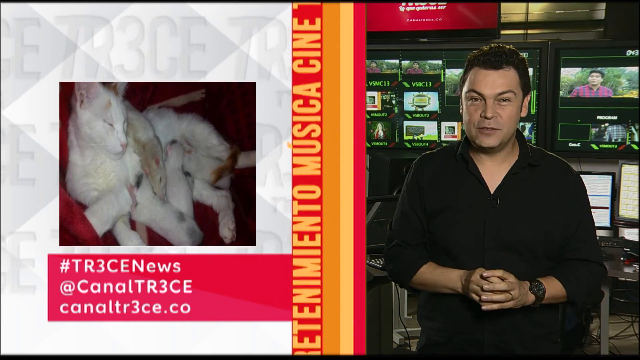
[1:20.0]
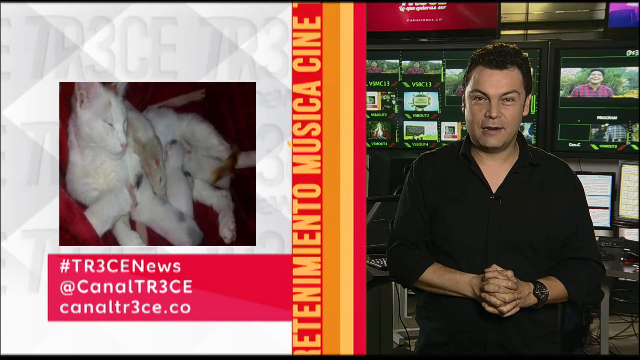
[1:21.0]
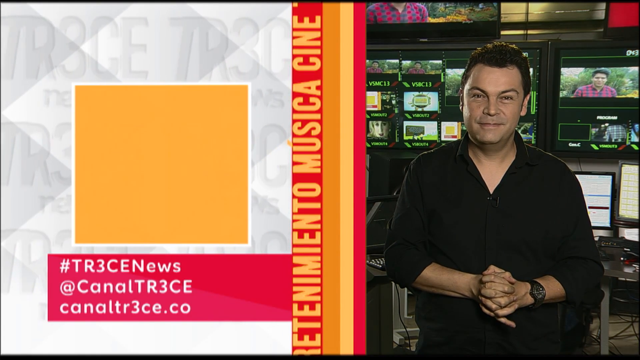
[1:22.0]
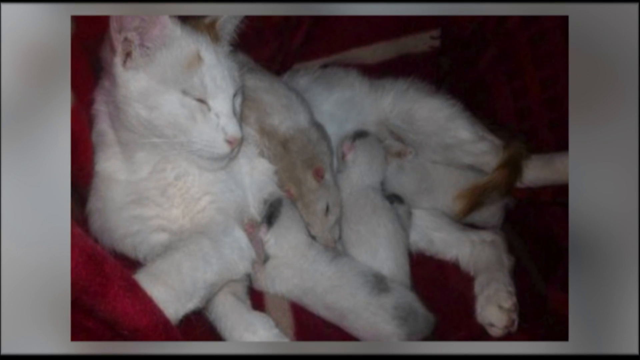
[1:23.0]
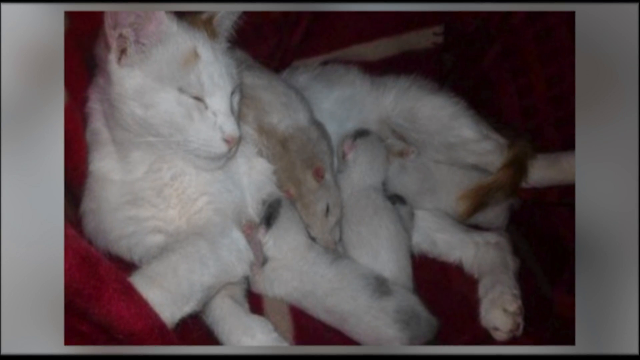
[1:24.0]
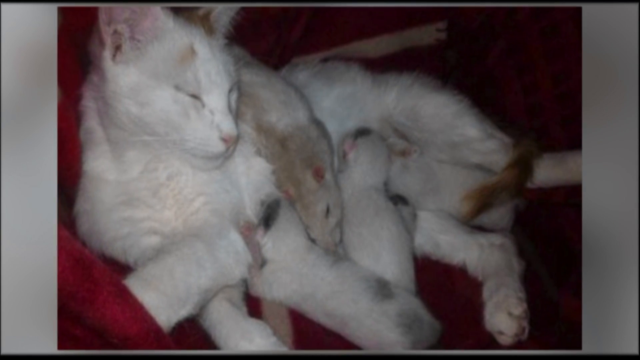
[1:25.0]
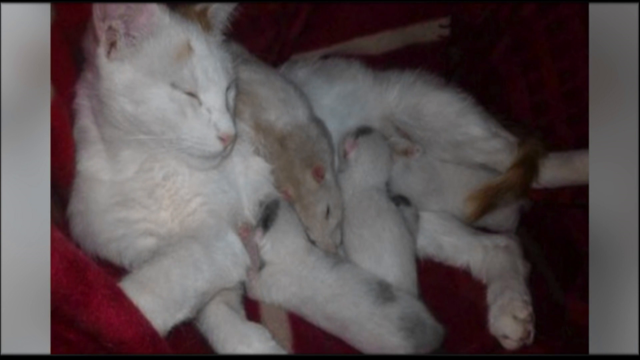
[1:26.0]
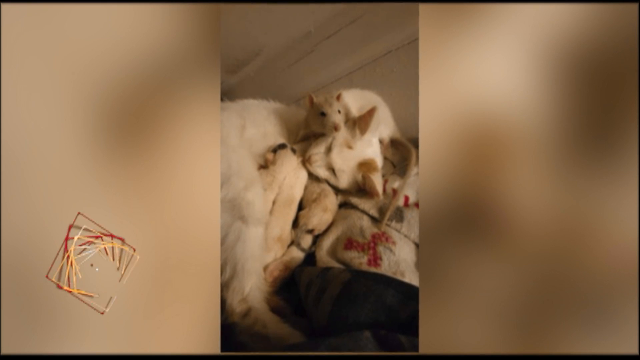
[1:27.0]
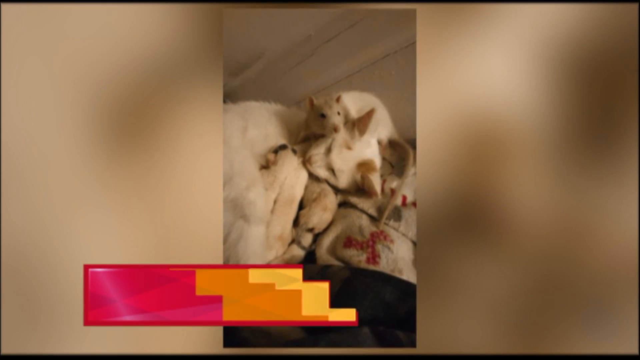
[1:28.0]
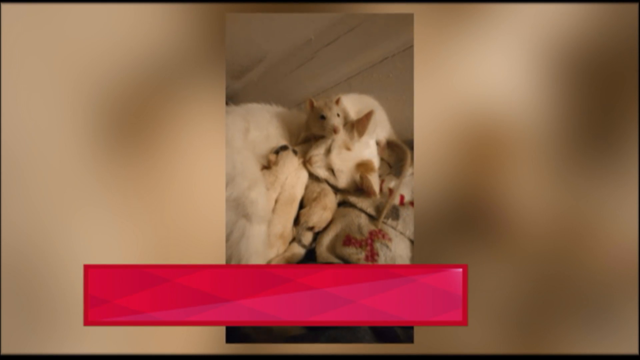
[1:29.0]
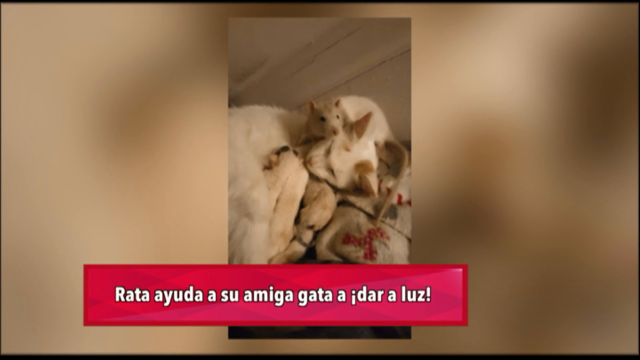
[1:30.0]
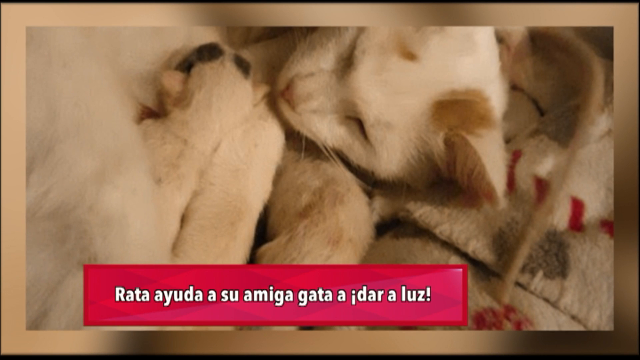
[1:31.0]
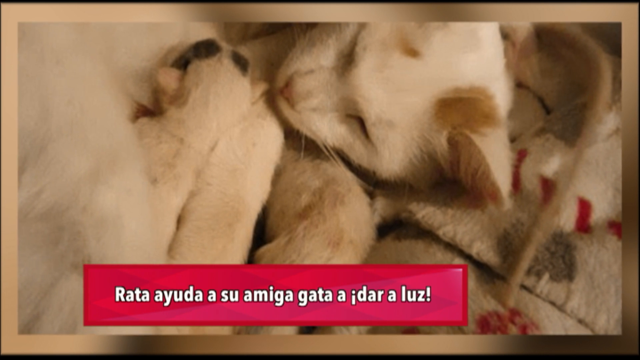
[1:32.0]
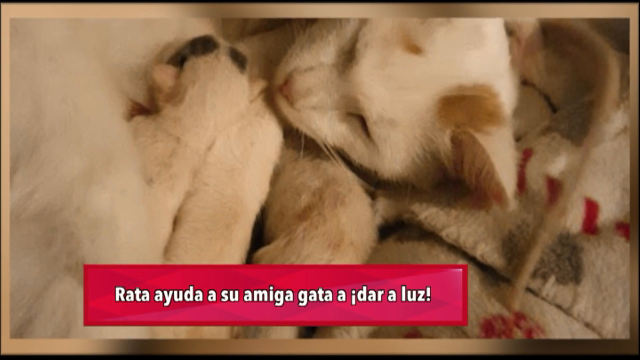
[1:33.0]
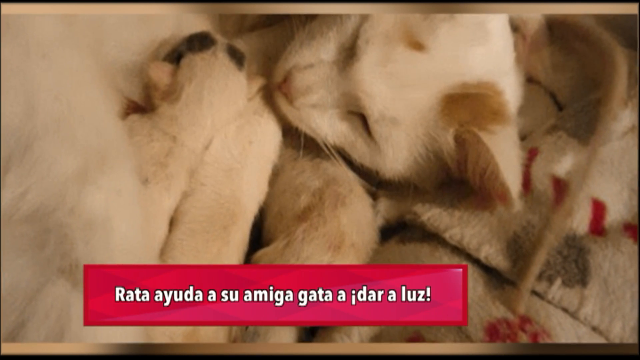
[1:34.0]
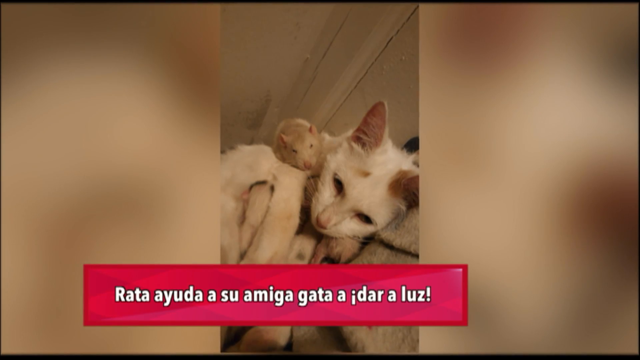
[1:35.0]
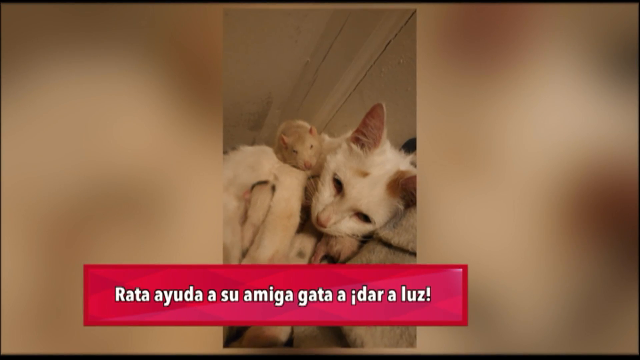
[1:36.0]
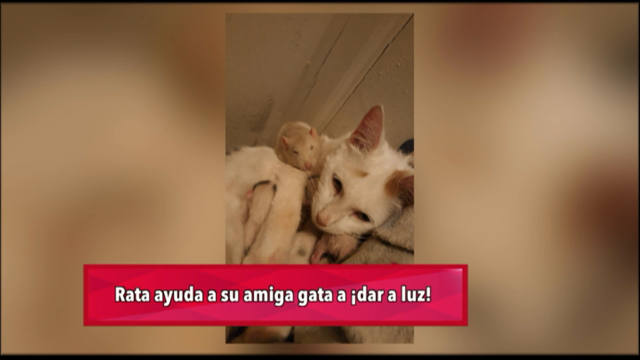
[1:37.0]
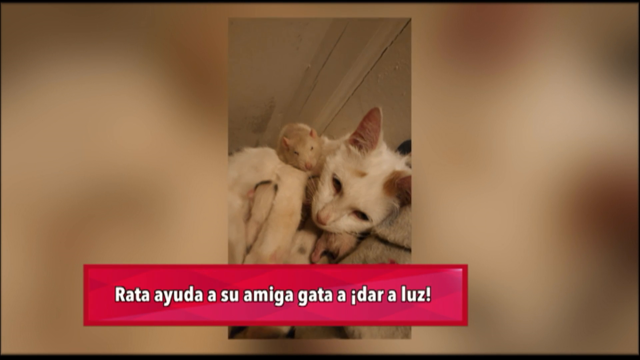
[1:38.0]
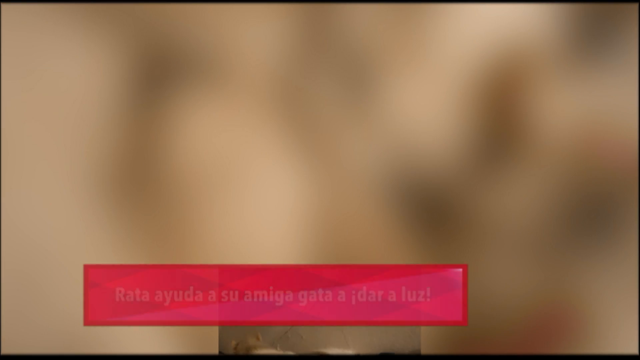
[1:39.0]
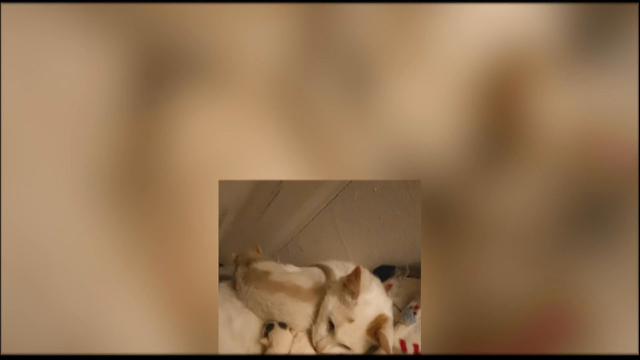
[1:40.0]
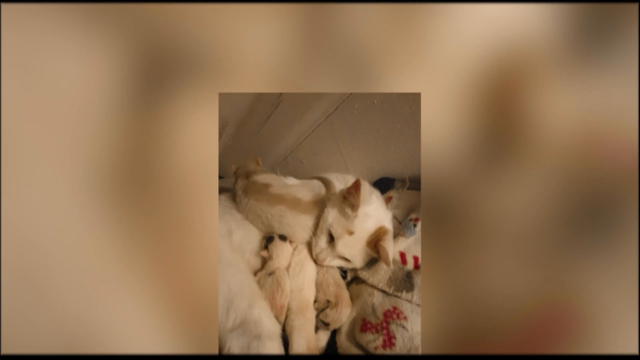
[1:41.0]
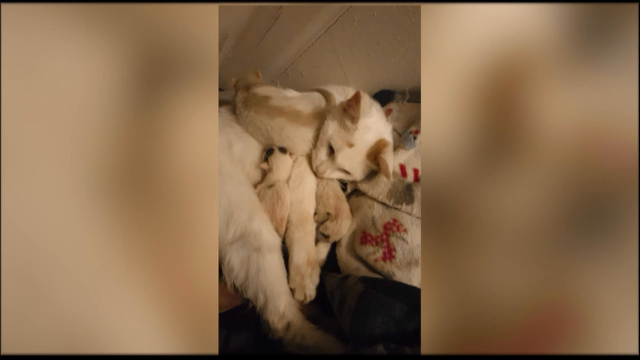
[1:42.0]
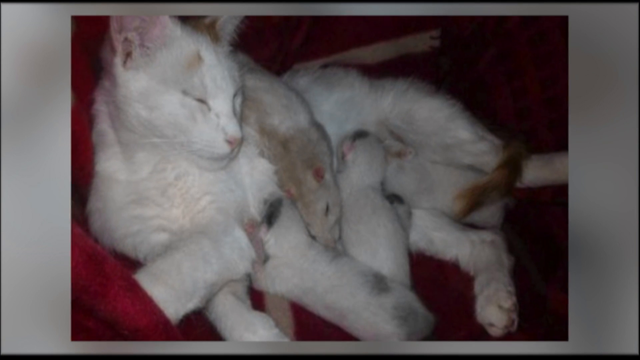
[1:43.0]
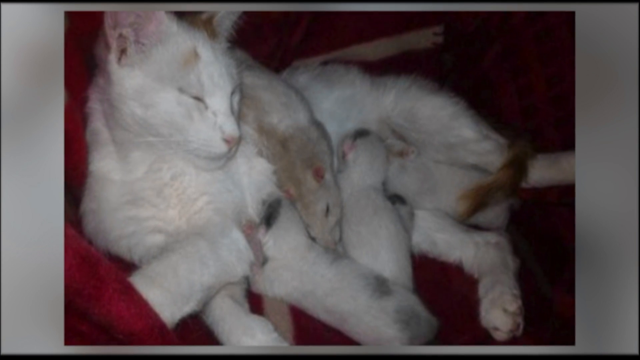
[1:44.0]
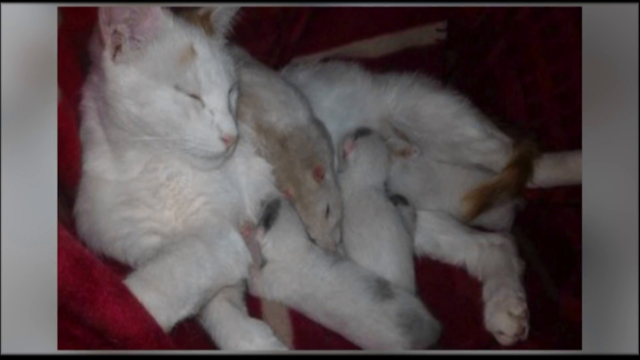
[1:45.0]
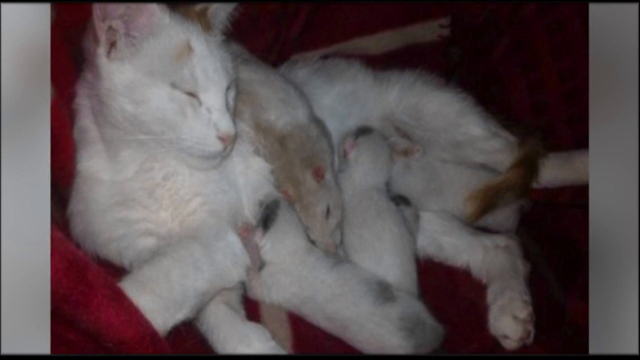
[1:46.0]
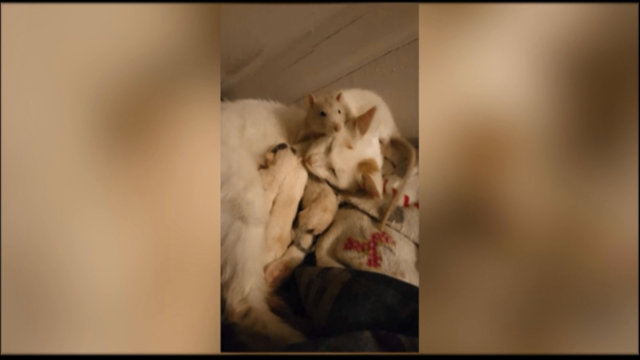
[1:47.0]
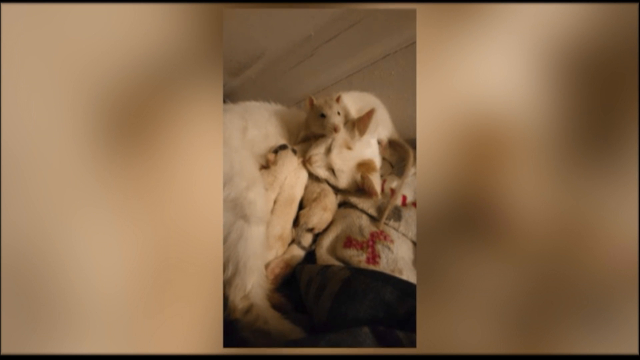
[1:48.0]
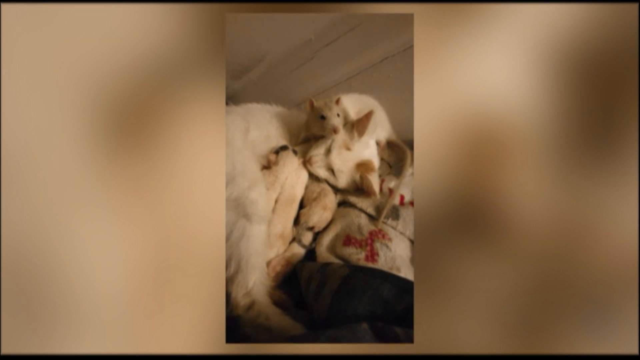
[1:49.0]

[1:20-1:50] The reporter in a black shirt with folded sleeves is shown again with his hands together and fingers interlocked, eyebrows raised, looking directly into the camera. He wears a black watch on his left hand. In the background are many screens with videos playing on them, and some robotics. On the left side is a picture of two white cats sleeping on a red mat. Below the cats is a label including "tr3cenews" and "canaltr3ce.co". These two photos rest on a white background. In the middle is a ribbon with writing in a foreign language, reading "musica, cine".